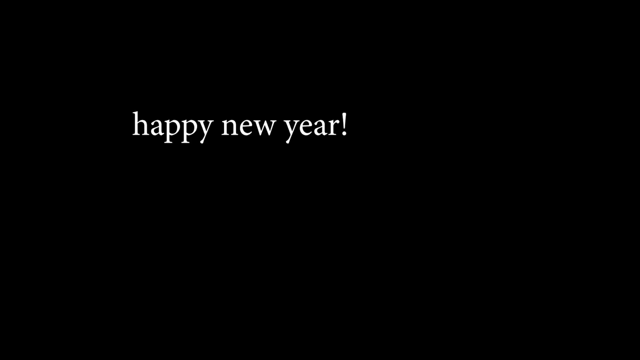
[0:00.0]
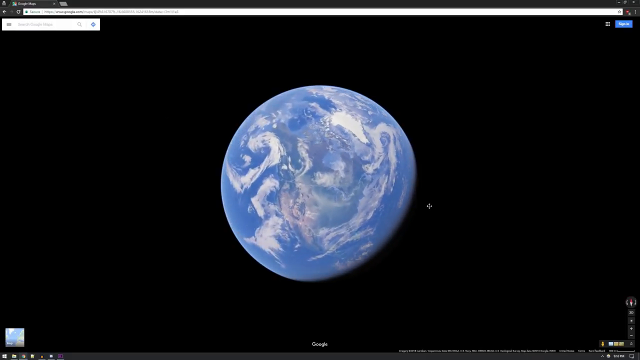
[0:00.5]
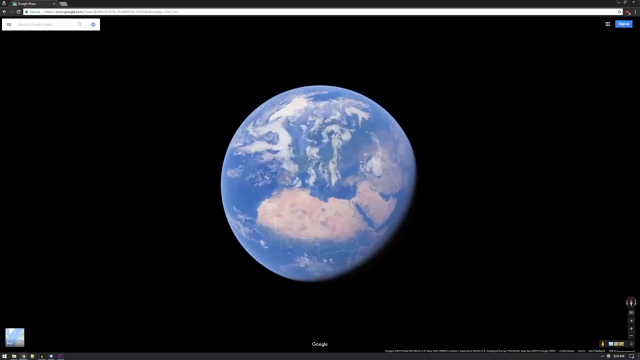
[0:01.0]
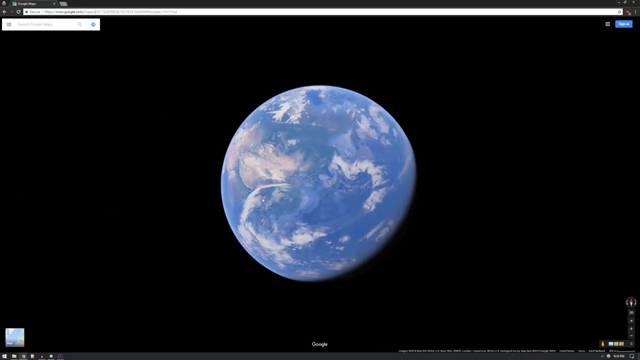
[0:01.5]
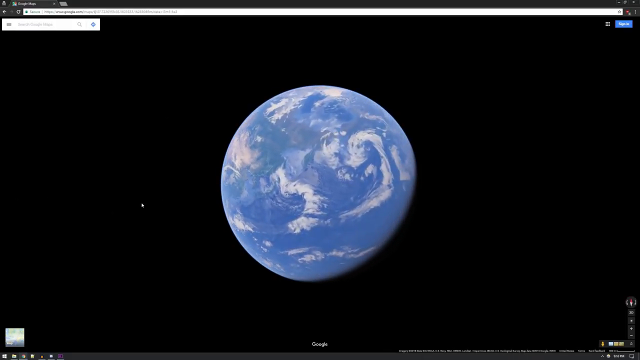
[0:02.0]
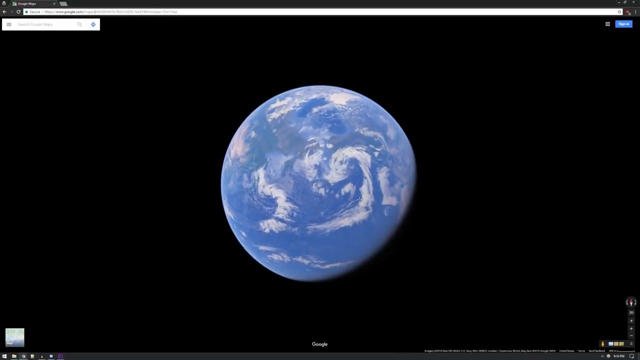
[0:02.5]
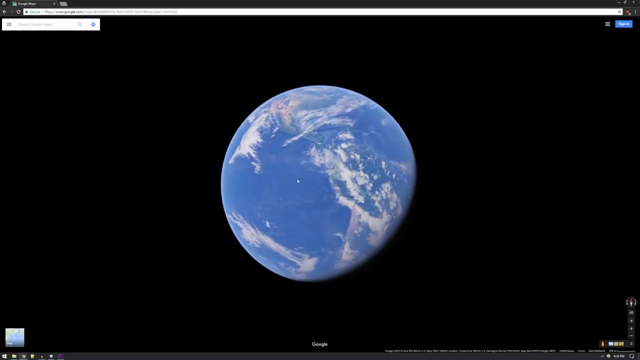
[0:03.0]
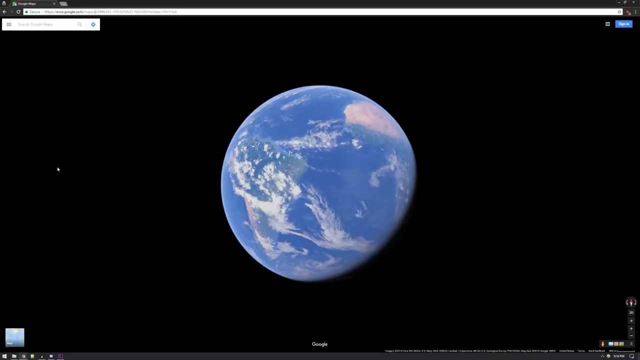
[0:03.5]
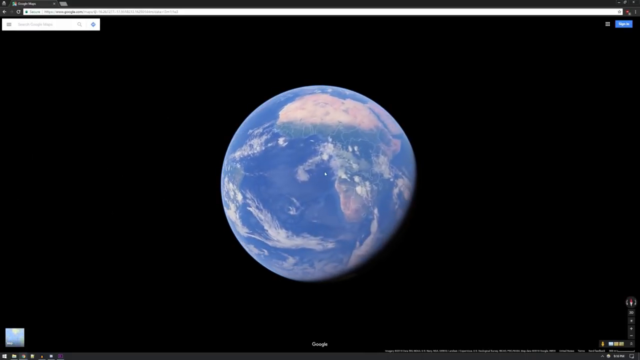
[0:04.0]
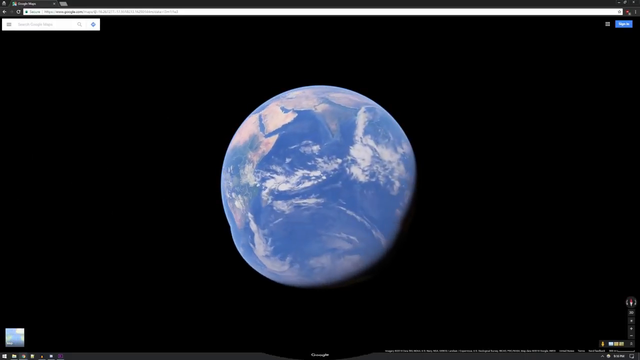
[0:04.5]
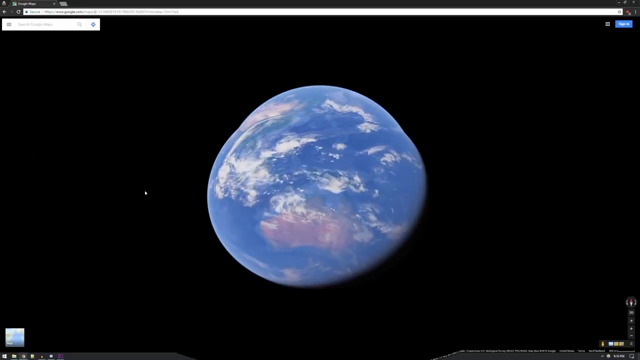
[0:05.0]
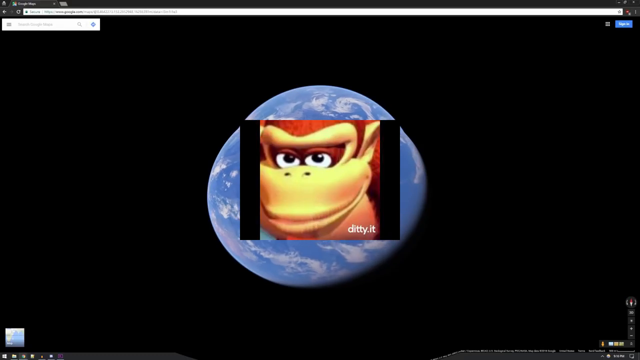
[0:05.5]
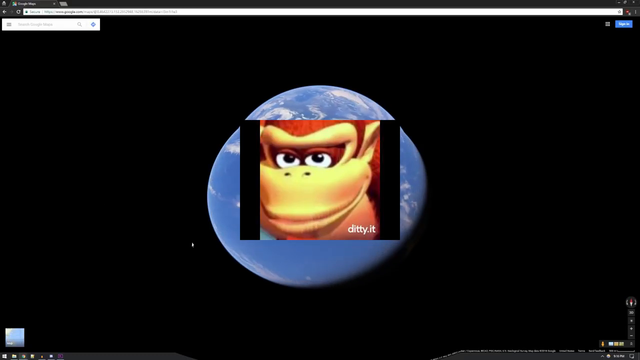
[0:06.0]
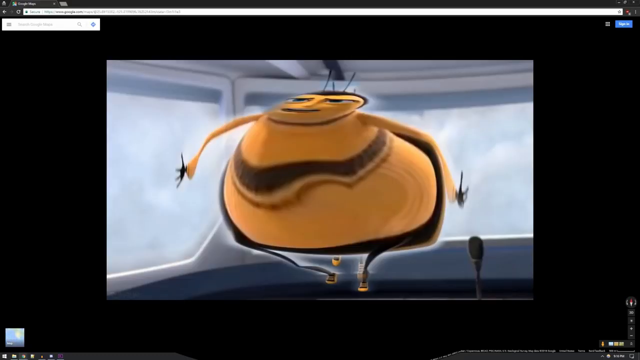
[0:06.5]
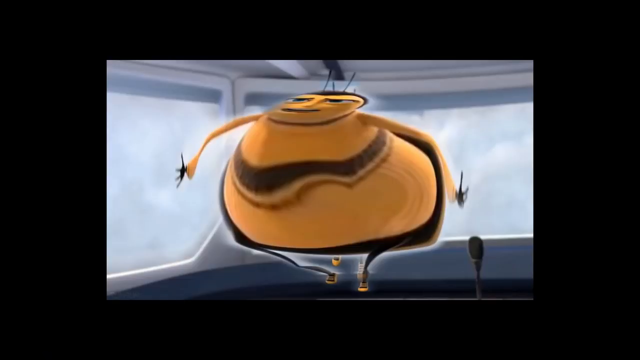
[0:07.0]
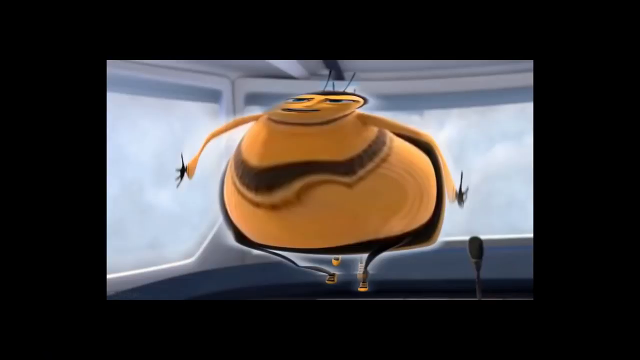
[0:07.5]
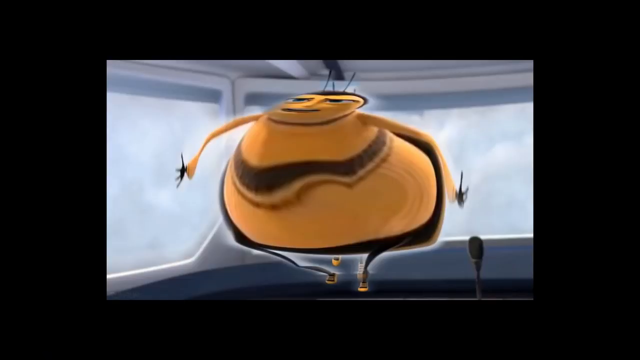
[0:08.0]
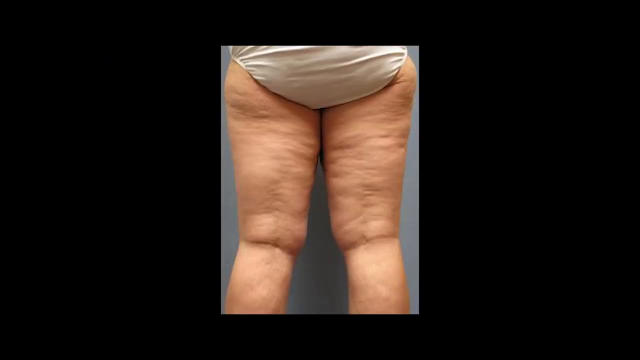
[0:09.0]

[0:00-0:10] The video opens with the text "happy new year!" in all lowercase letters. A world revolves on screen; it is not completely round, with the bottom shaved off a little, and land and sea are visible on it. It rotates from right to left but not consistently in one direction, also turning from top to bottom and bottom to top, all different ways. Its sides then push outward, almost like a squeezy ball being squeezed. Out of the rotating world comes a picture, a little box showing the face of a bee, and the bee then becomes more prominent; it is a cartoon bee that looks like one from the Bee Movie. A woman's legs are shown from behind, with a lot of cellulite on them. Then "happy new year" appears again.